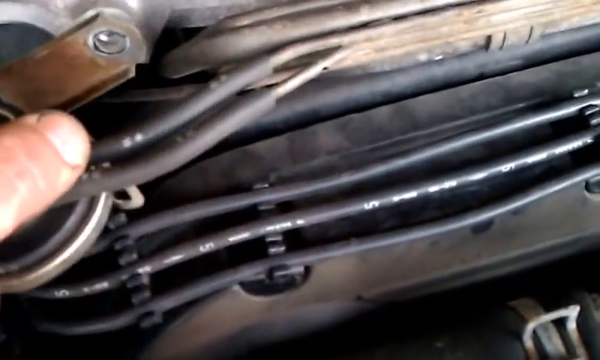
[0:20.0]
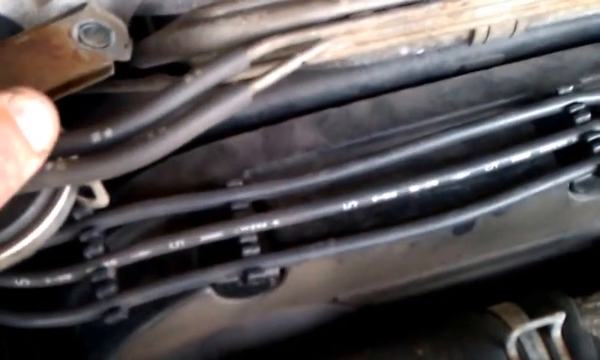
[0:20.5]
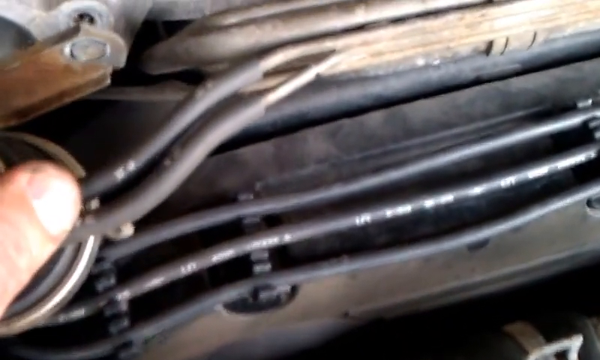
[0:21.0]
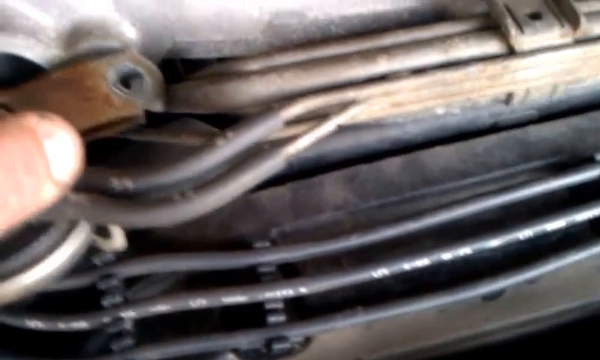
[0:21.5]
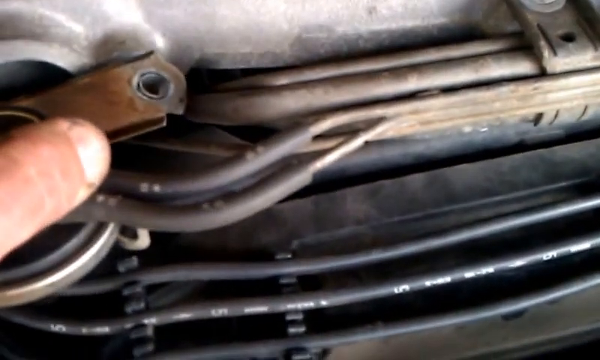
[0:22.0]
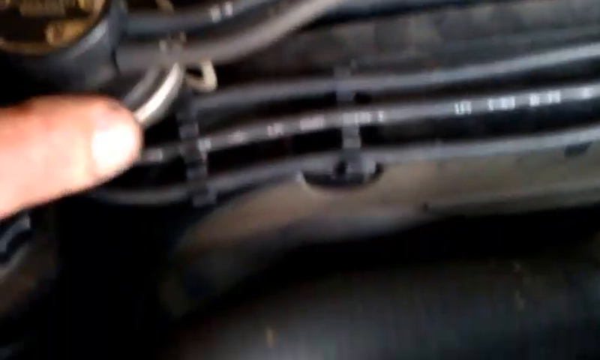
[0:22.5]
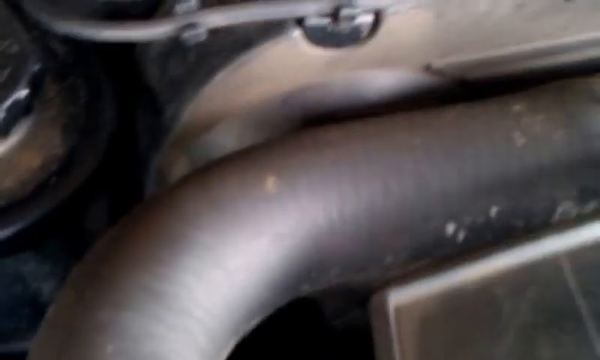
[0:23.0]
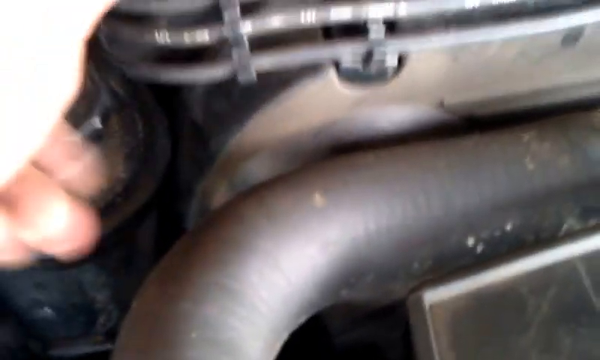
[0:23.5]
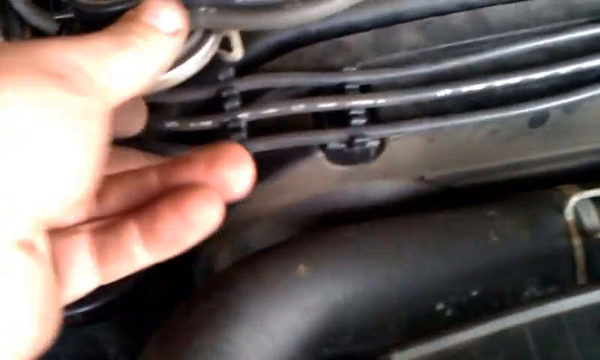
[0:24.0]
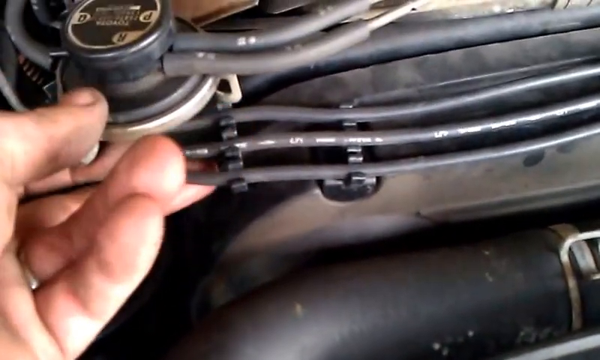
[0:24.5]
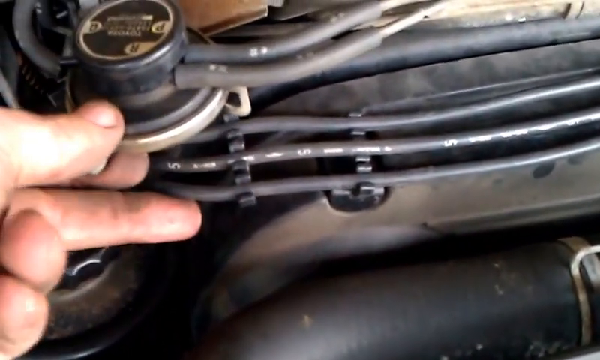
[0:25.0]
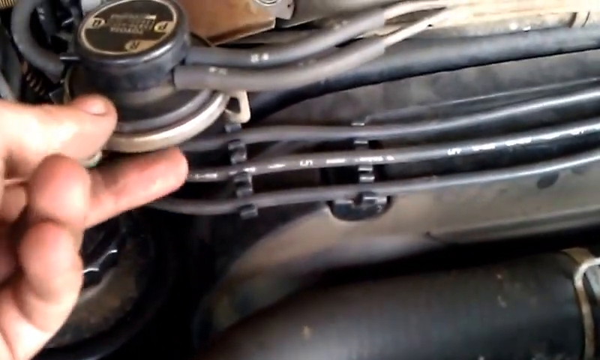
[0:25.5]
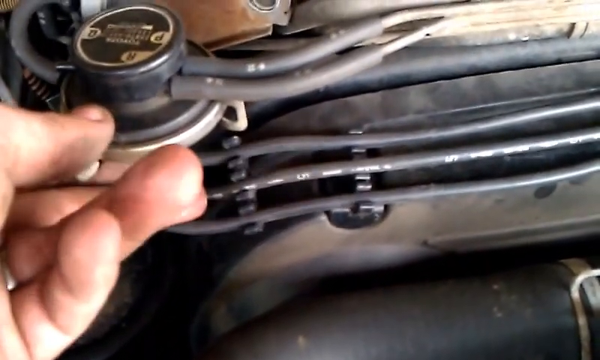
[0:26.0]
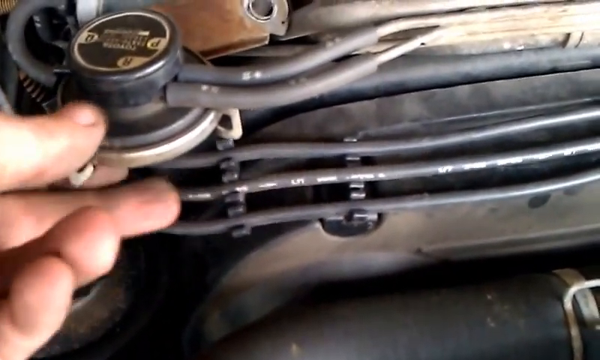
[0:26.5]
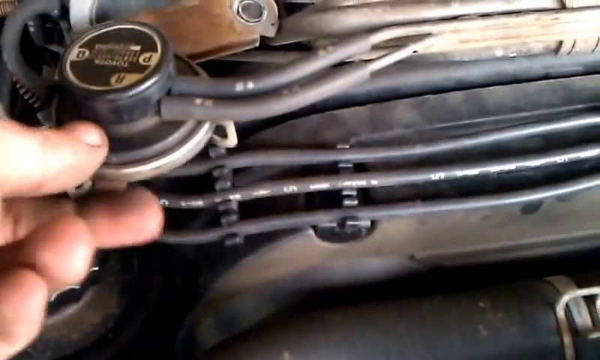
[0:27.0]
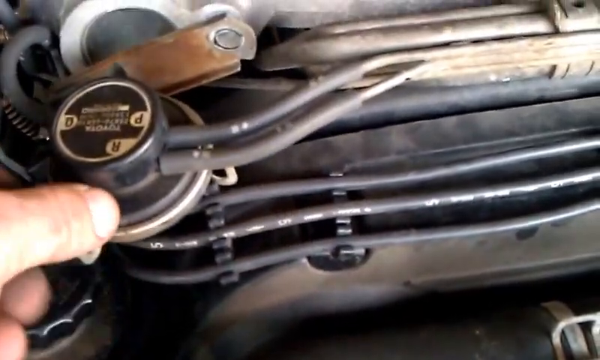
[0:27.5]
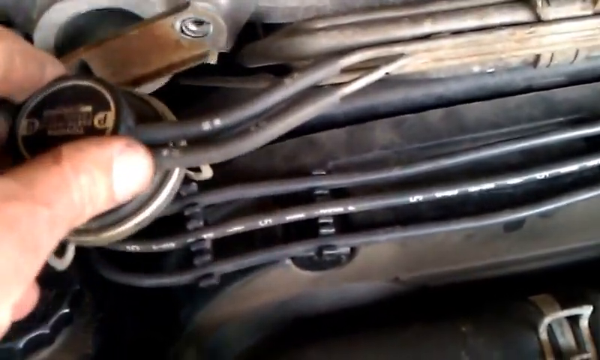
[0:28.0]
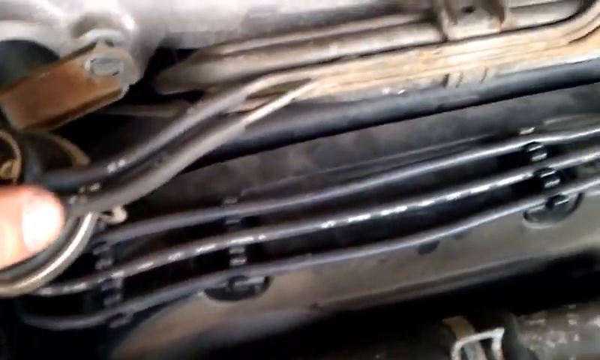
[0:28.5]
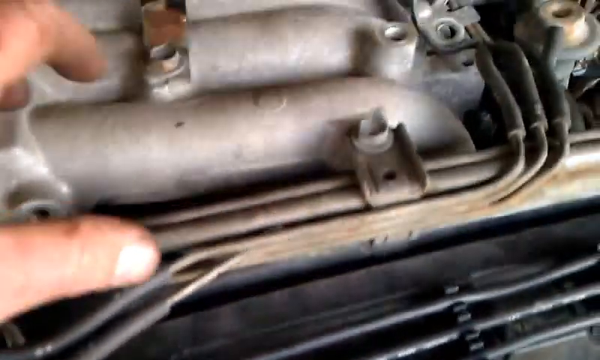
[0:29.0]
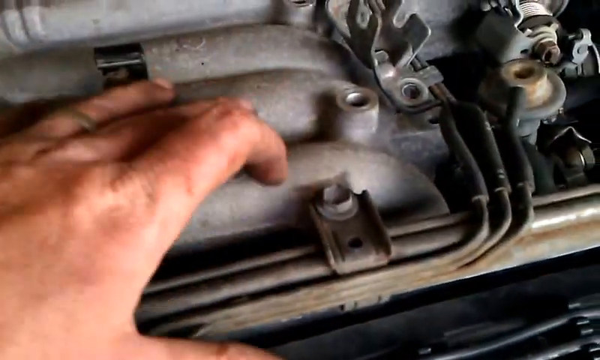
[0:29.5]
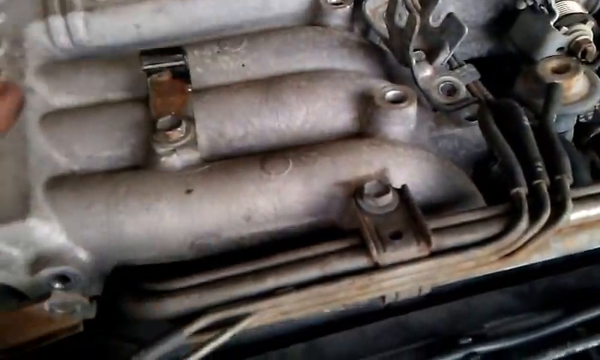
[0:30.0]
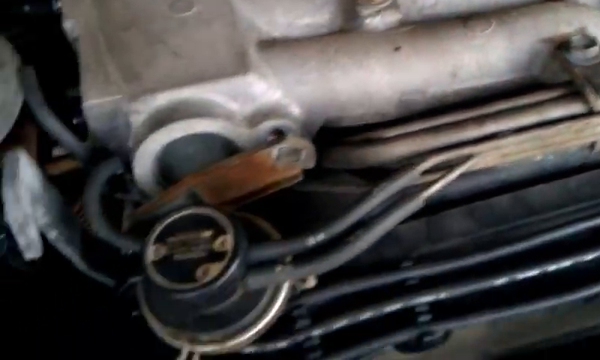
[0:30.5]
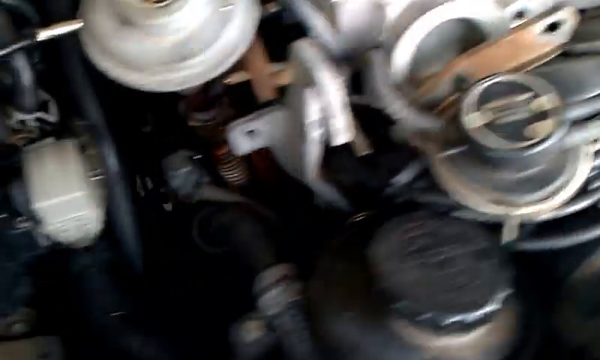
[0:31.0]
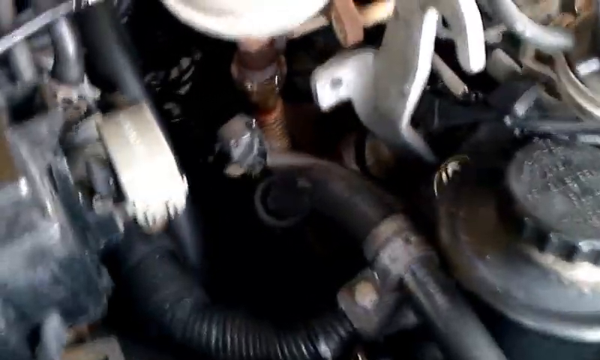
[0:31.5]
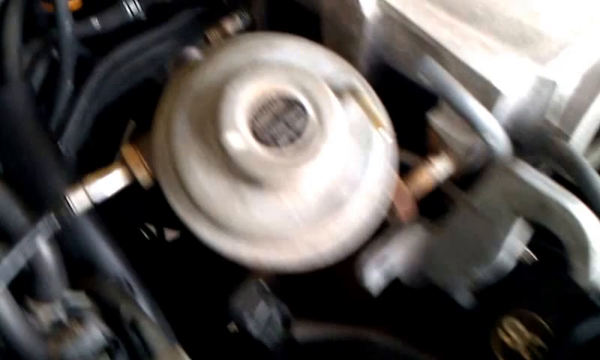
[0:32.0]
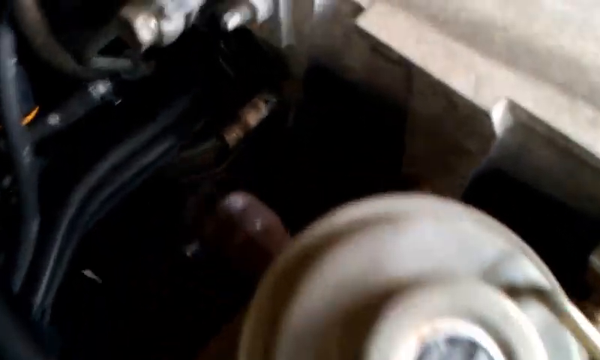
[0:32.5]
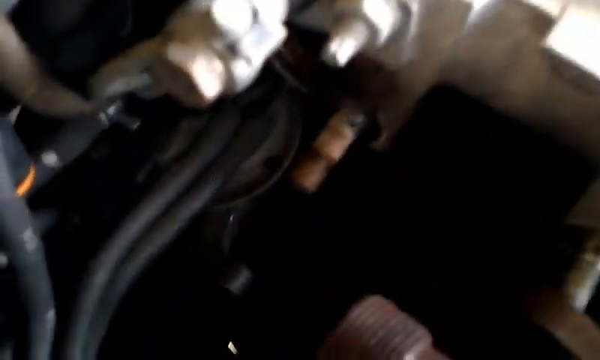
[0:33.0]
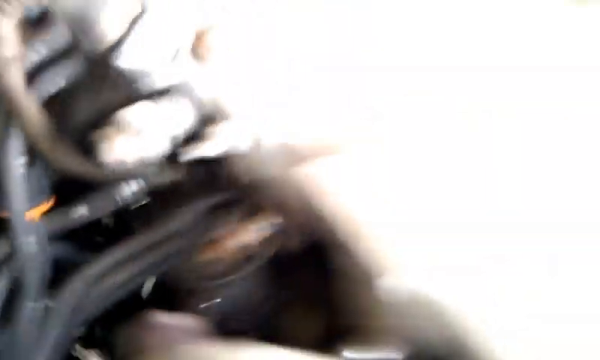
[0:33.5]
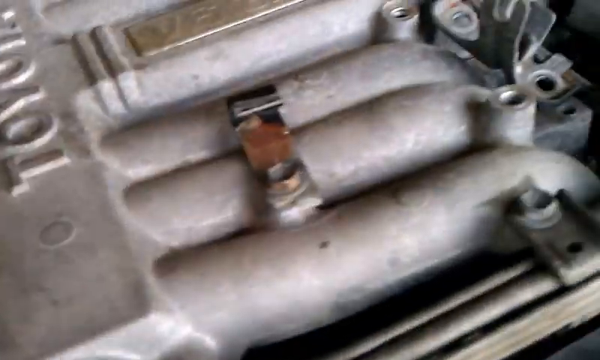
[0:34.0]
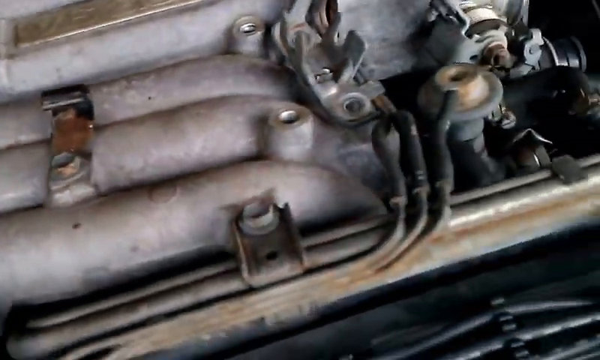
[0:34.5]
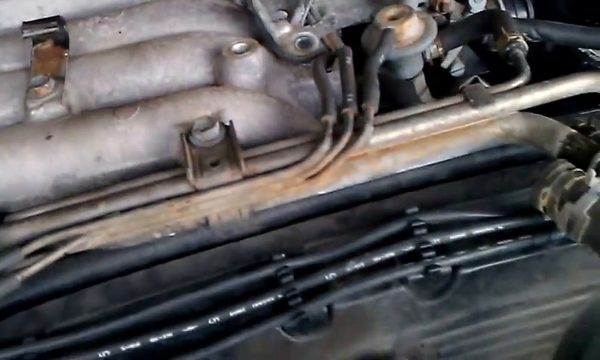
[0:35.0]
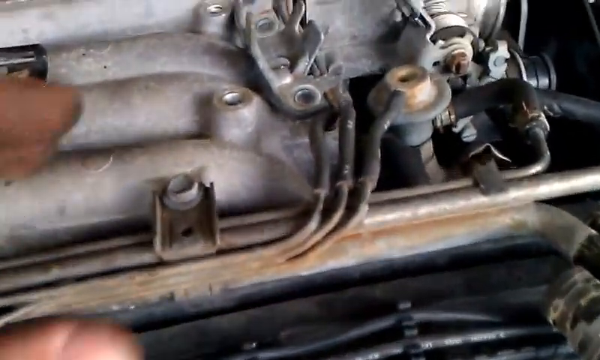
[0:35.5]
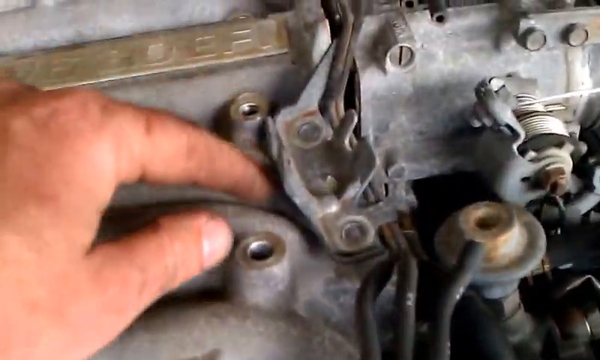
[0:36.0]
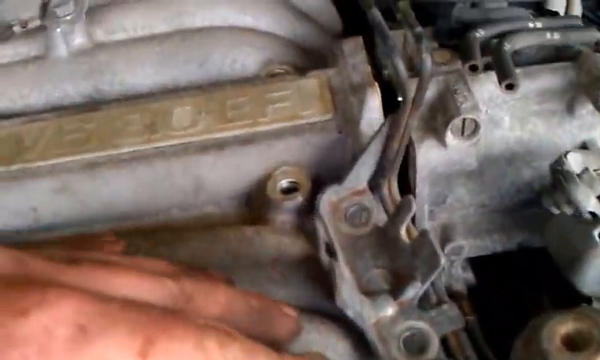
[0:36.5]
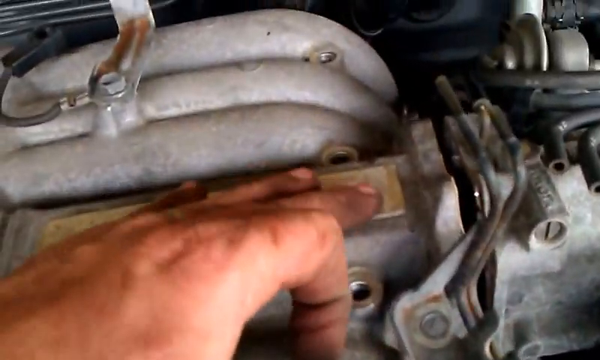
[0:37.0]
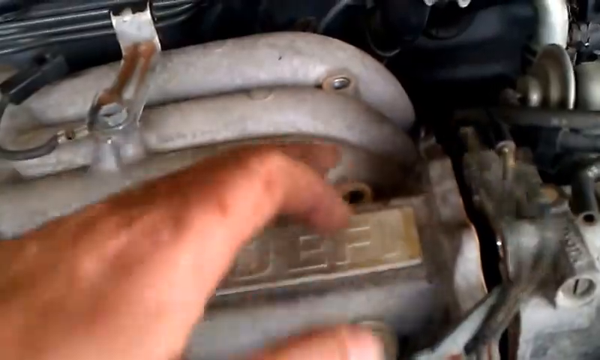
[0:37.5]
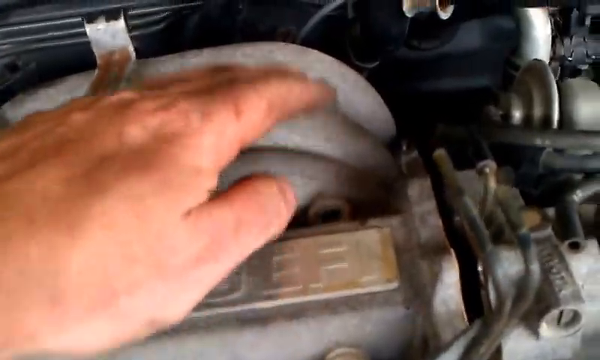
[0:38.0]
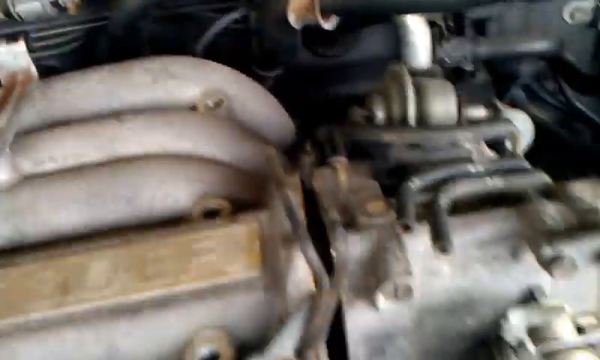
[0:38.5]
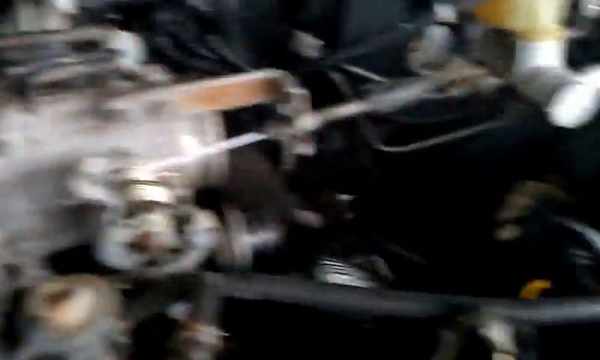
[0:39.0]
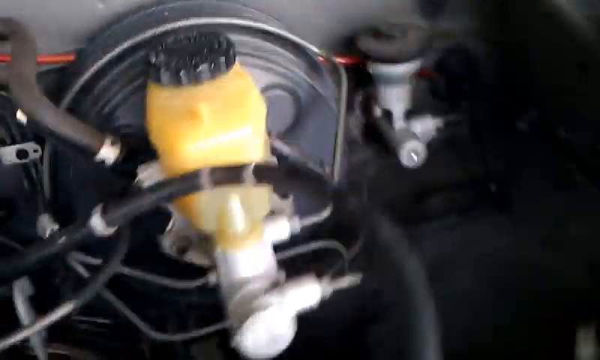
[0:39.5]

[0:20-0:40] Zoomed in close, a little of the thumb is visible on the radiator cap on the left side, showing just the thumbnail and the first joint below it. Two wires come off just to the right of the thumb, go up near the top and then straight over. Below them, two run straight across the top of the radiator. The hand wiggles the lid back and forth; it looks like it is broken. The camera moves down a little, showing the underside of it with three cables going down across under it. The thumb is on top, the pointer and middle fingers are under the edge of the cap, and the other two fingers point up at the camera as the hand moves it up and down. The middle finger pushes down on the three hoses running across, then the hand moves back to the top of the cap and pulls it up and down, and it bounces. The camera moves back up to the bottom right of the engine, back to the cap, and then over to the left side and back to the front. Several spots have holes that look like screws should be in them, but they are not. The camera moves up to show another one, then goes quickly over to the right side of the engine.